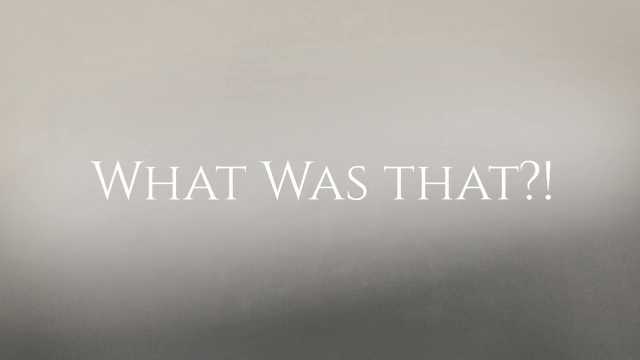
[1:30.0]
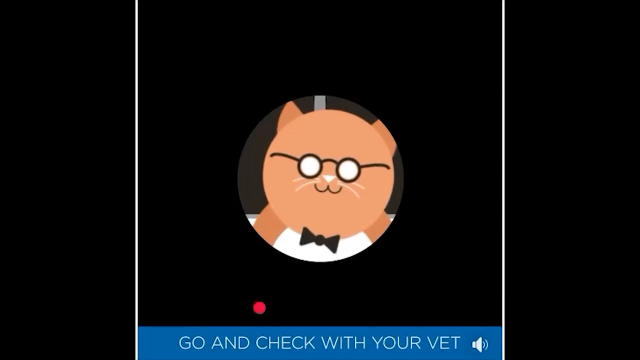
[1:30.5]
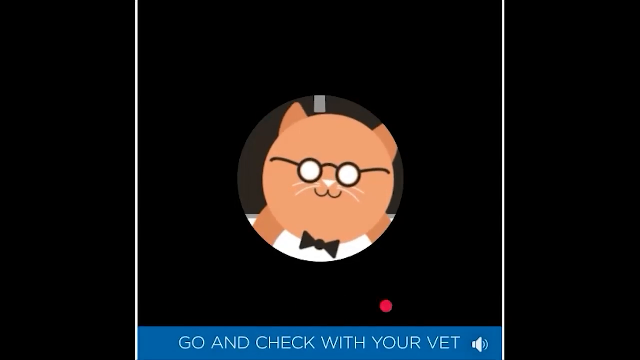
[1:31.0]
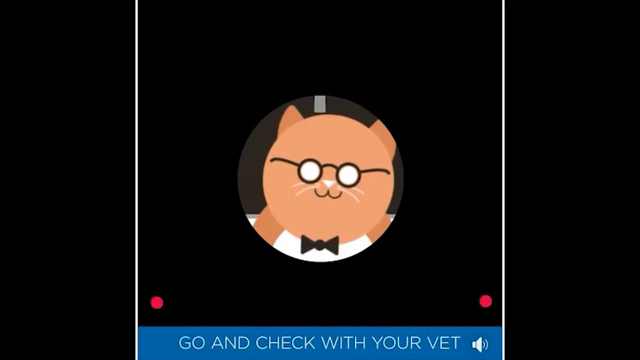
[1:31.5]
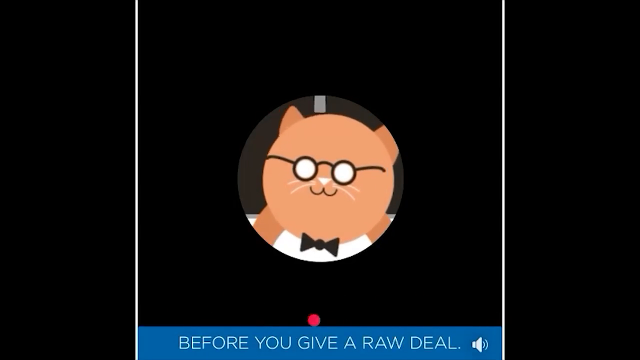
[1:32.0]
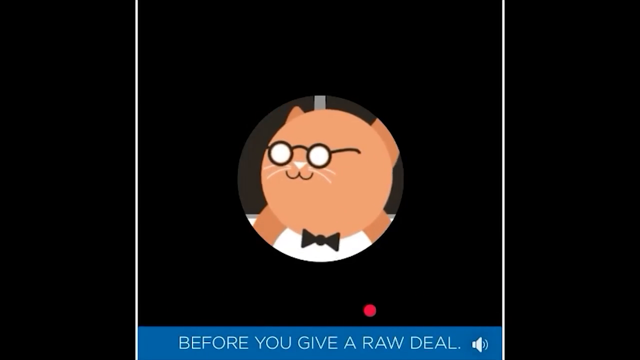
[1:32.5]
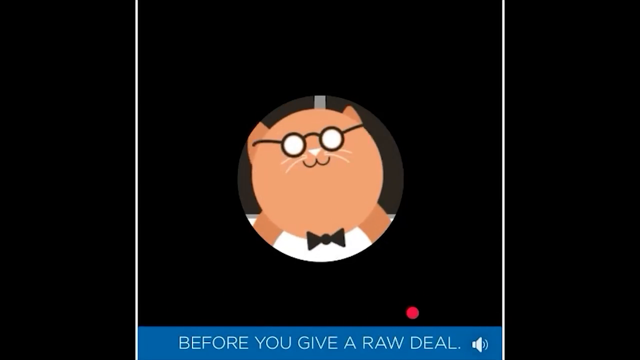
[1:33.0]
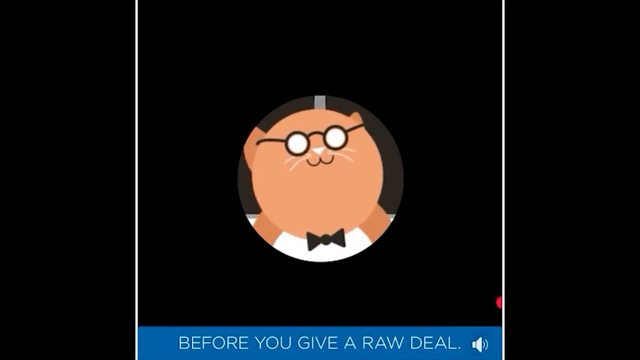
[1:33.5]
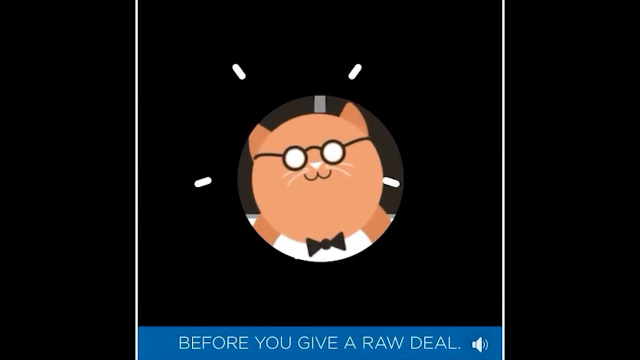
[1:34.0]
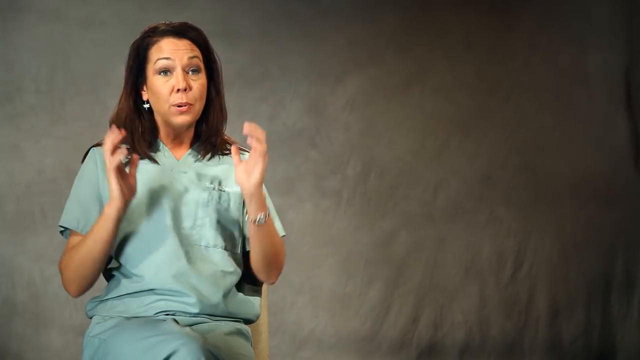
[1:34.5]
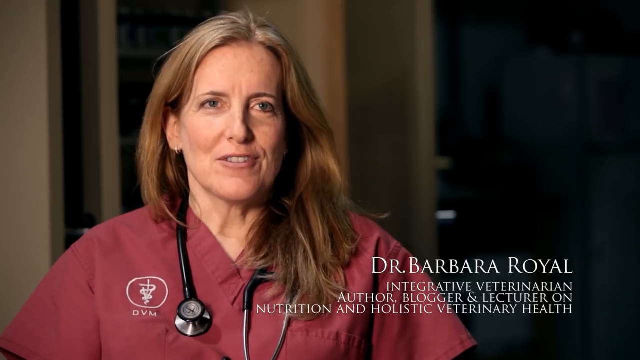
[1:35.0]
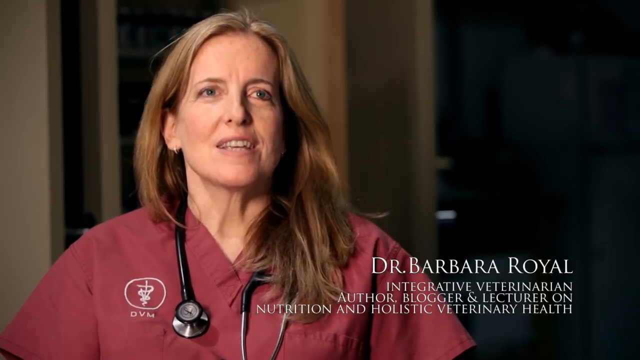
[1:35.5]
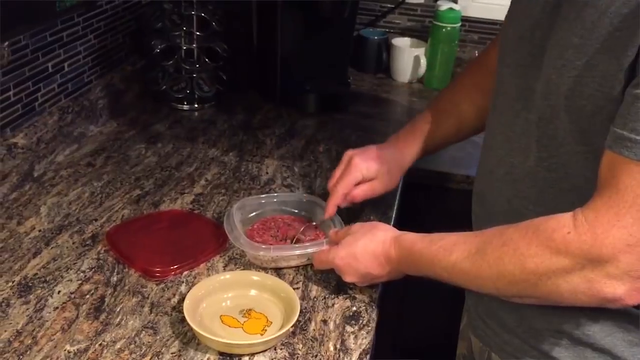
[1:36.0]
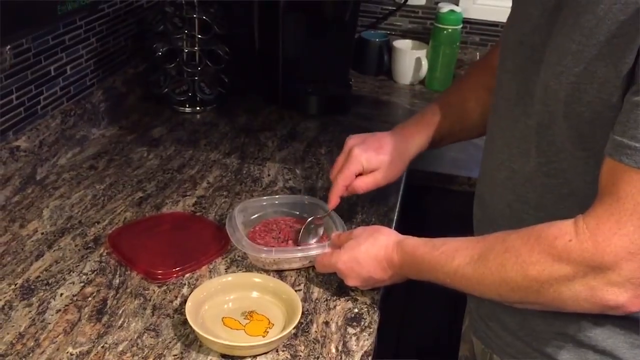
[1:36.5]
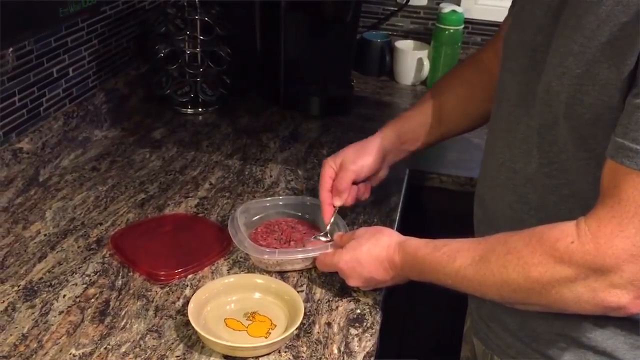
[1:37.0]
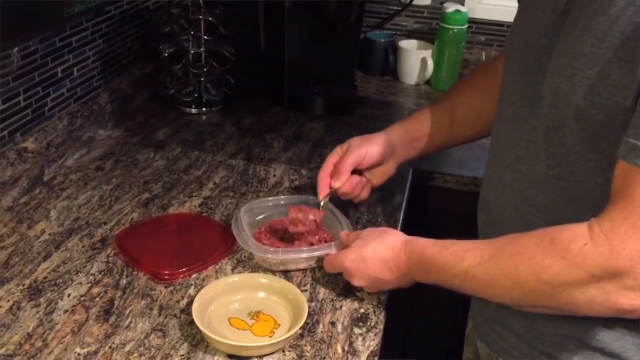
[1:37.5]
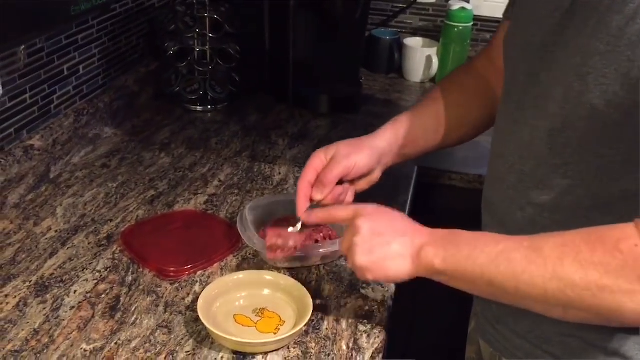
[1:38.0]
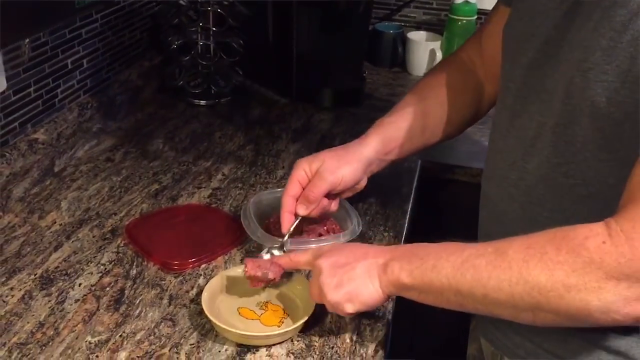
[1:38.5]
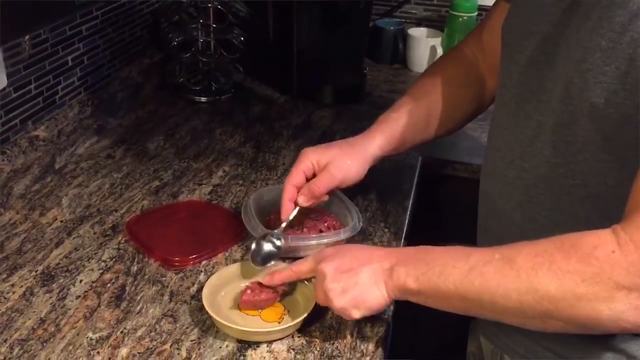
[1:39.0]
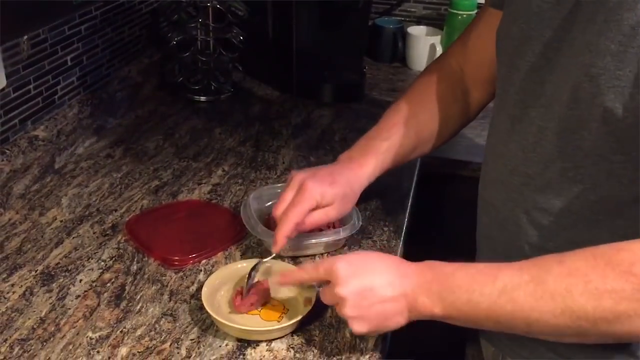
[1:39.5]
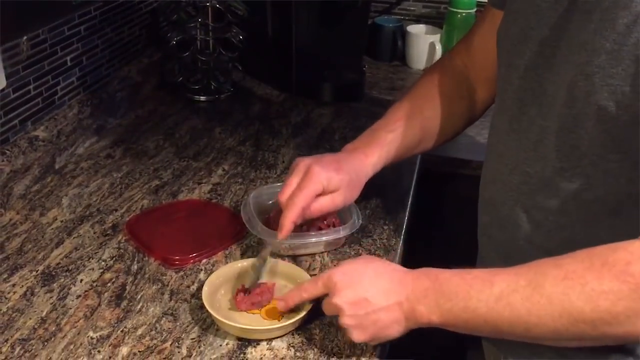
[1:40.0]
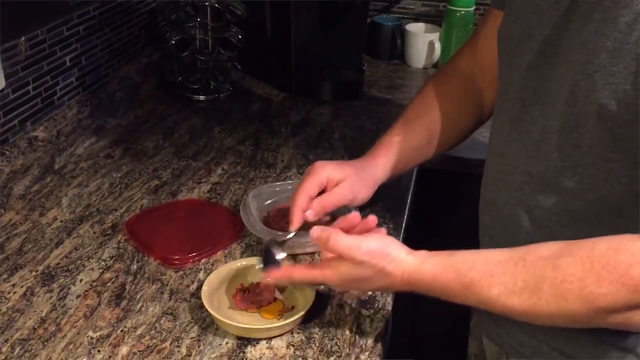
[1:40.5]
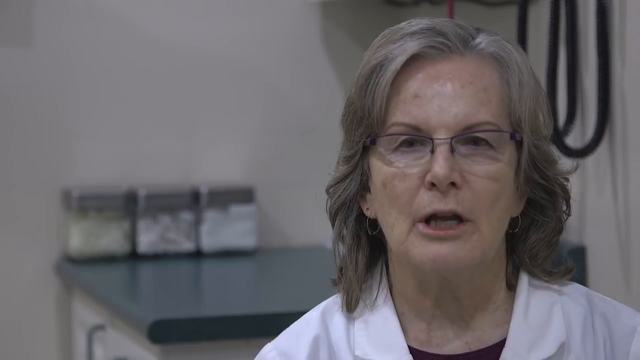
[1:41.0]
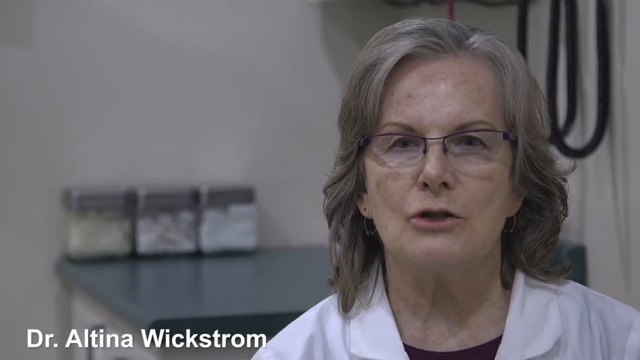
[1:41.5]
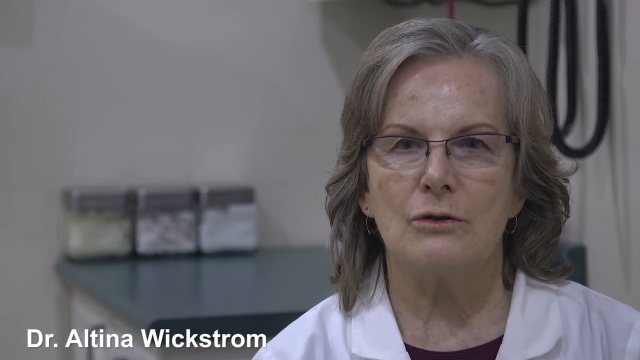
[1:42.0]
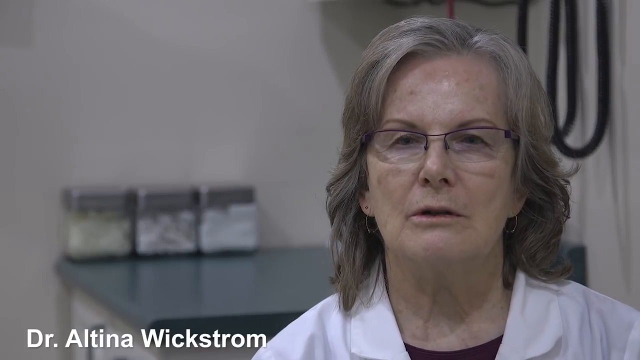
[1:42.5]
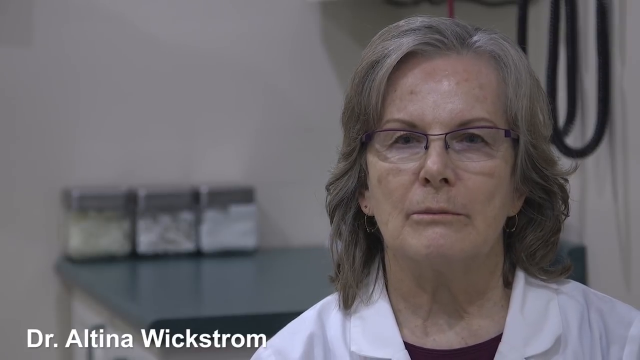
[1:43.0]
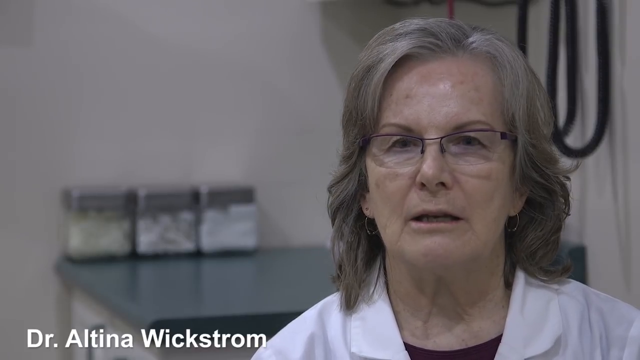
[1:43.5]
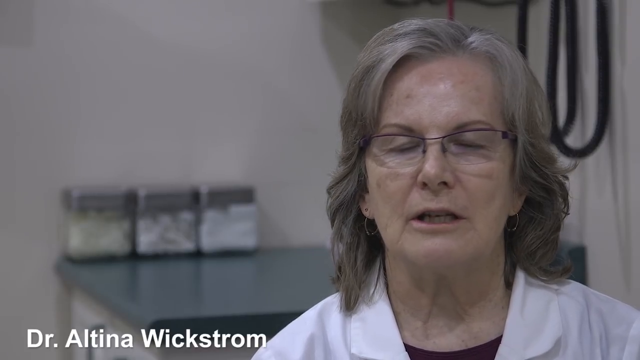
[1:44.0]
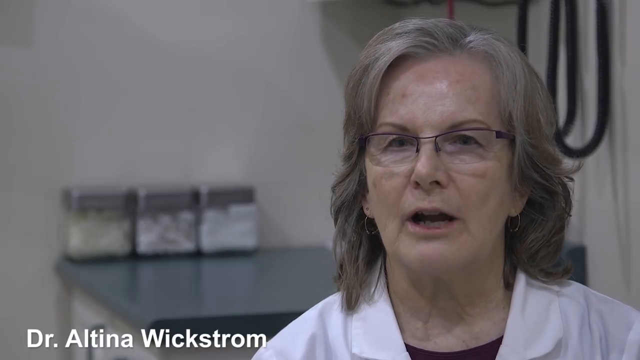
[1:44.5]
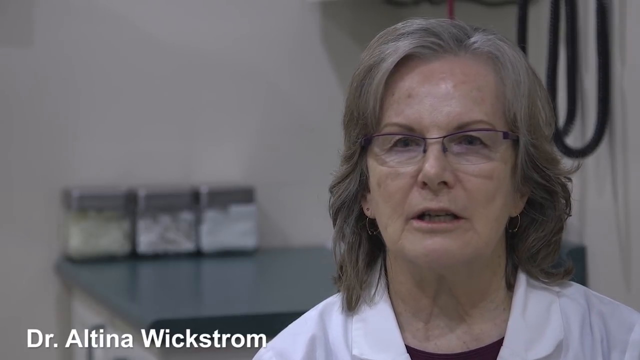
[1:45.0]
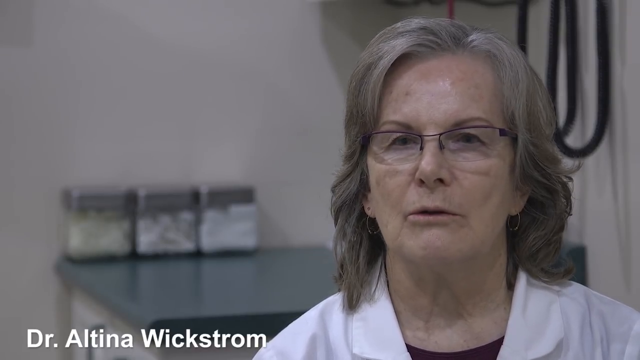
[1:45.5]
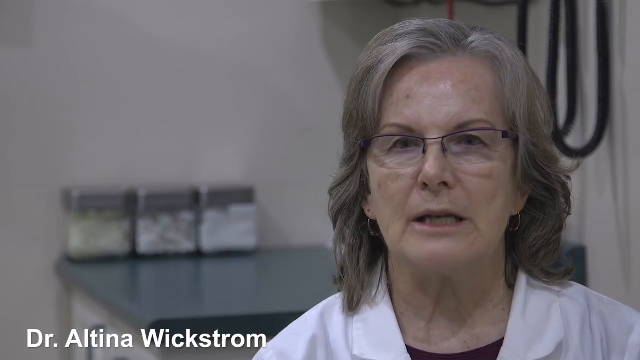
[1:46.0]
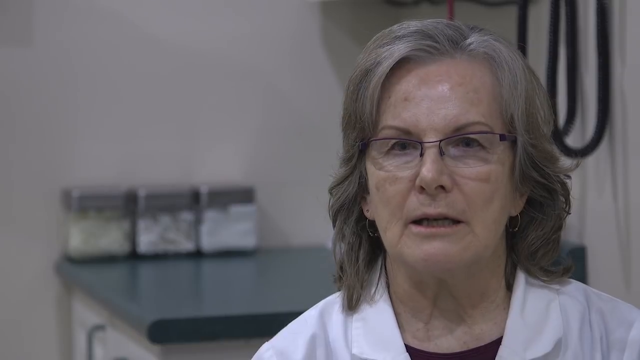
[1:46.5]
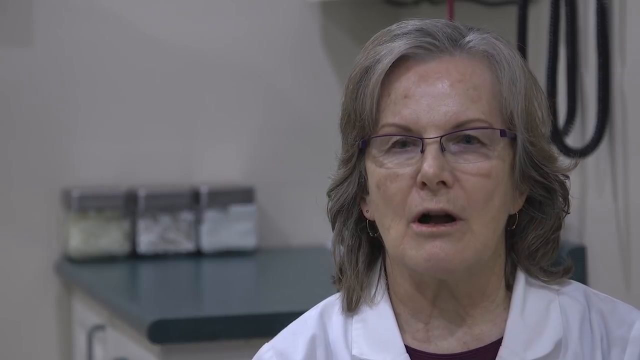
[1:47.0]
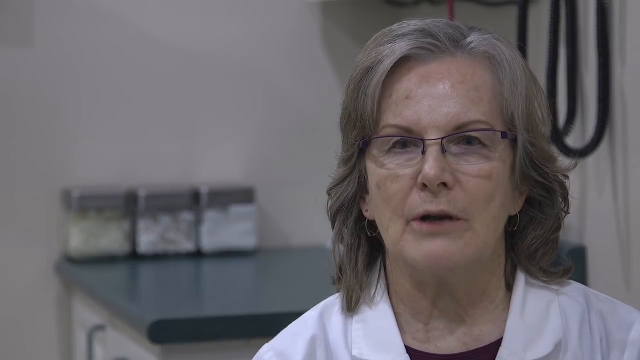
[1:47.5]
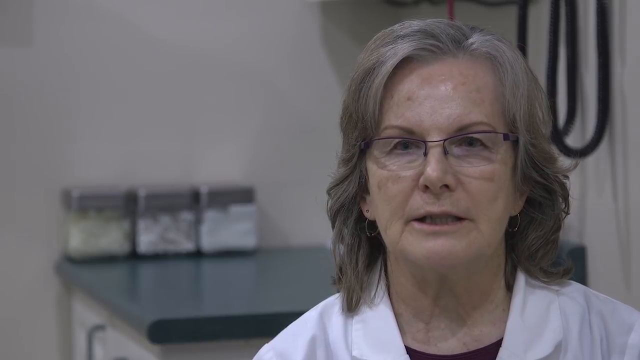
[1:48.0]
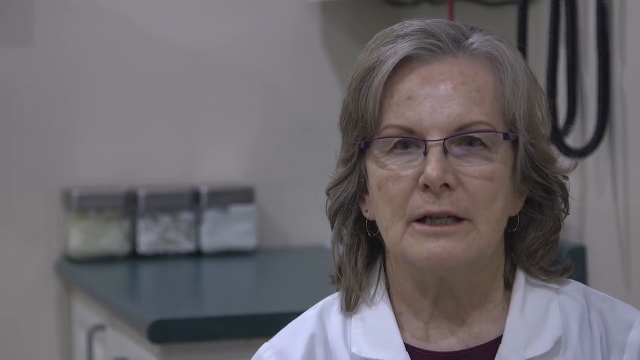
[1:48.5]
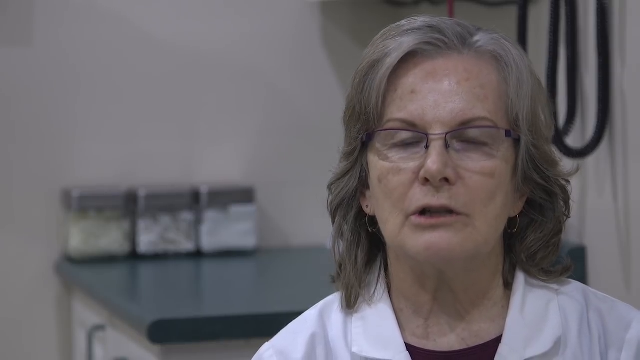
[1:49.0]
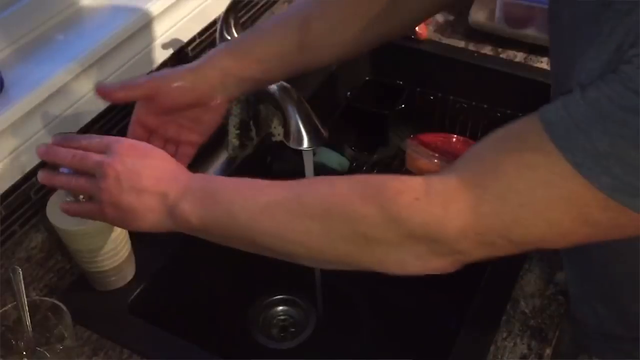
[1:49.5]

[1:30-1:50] The cartoon cat is just visible inside a circle on the screen, moving its head backwards and forwards and seeming quite happy. The video quickly changes to some real people, too fast to follow. Someone with a tupperware of raw meat in front of them uses a spoon in their right hand to mush up the meat and pushes it into a cat bowl with the index finger of their left hand. A doctor with grey hair in a white jacket talks to the camera, moving her head back and forth a lot with quite a neutral look on her face. Next, a man about to wash his hands holds his right hand under a soap dispenser and presses down on the top with his left hand.